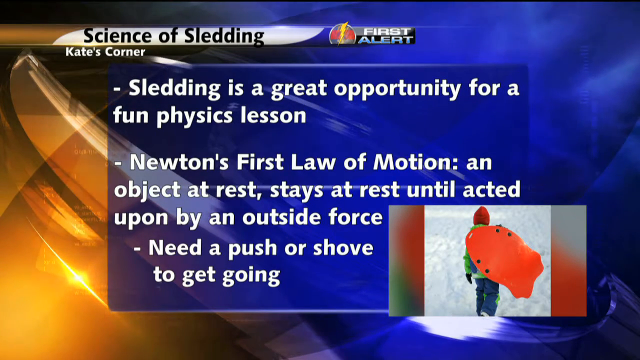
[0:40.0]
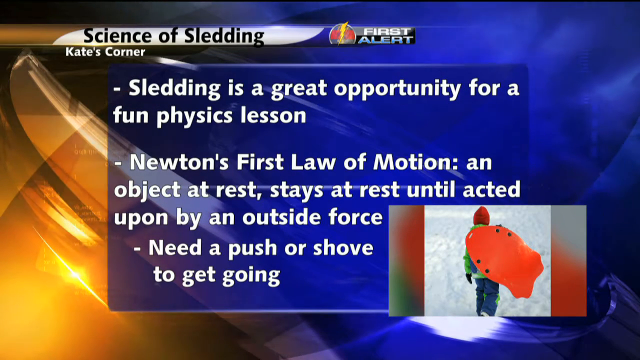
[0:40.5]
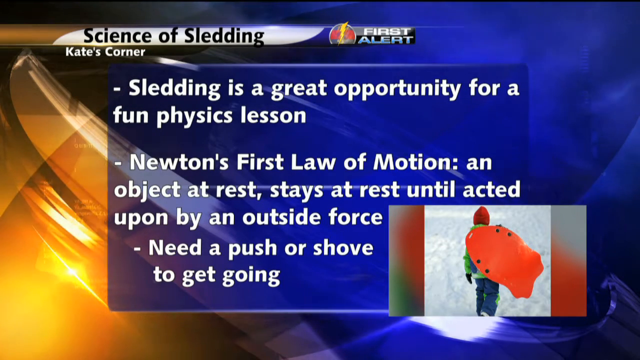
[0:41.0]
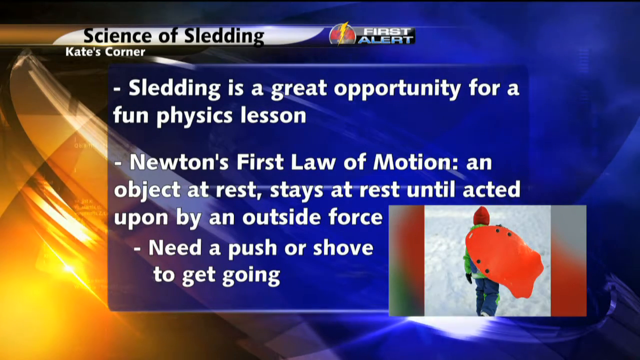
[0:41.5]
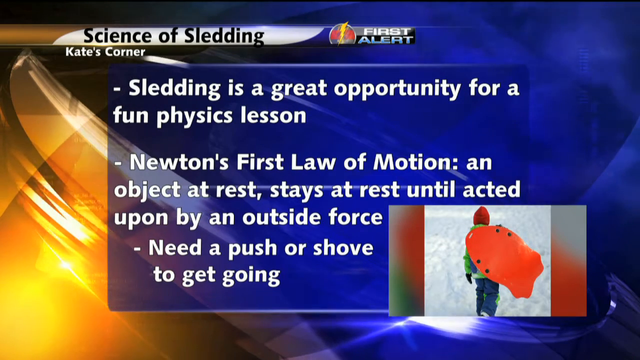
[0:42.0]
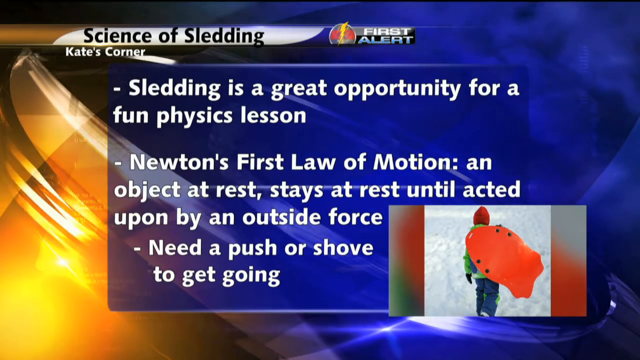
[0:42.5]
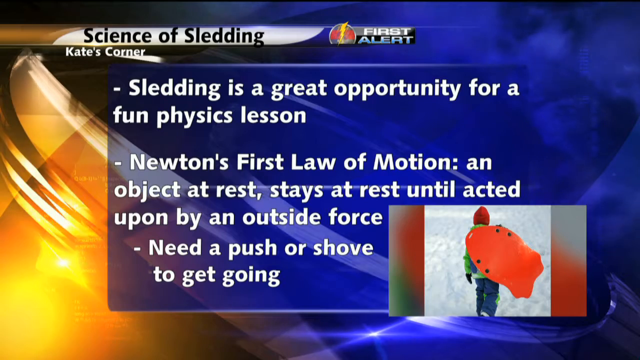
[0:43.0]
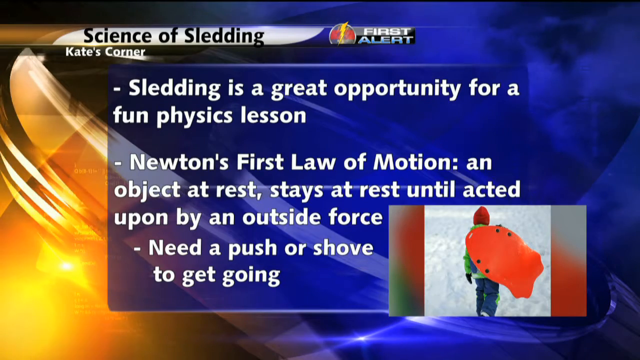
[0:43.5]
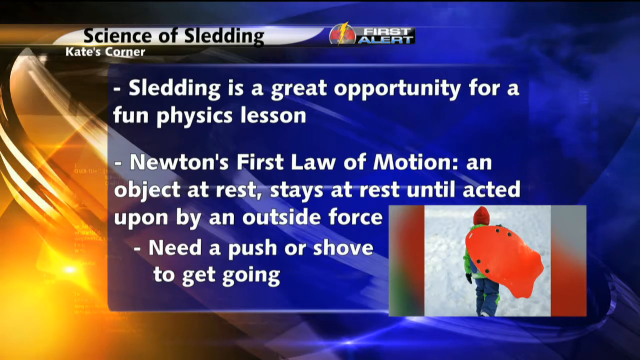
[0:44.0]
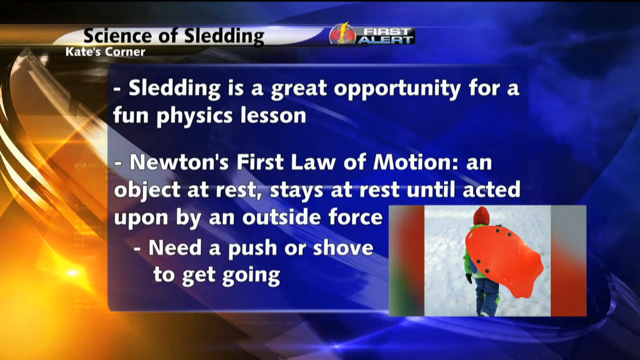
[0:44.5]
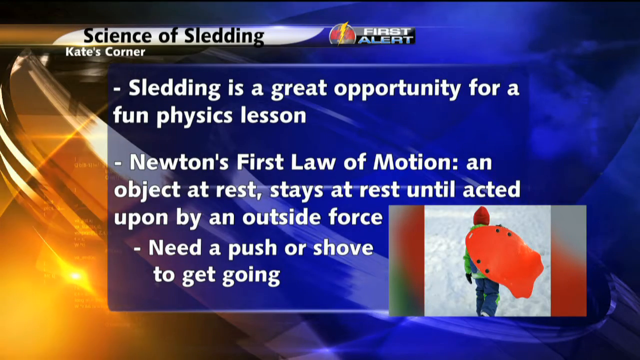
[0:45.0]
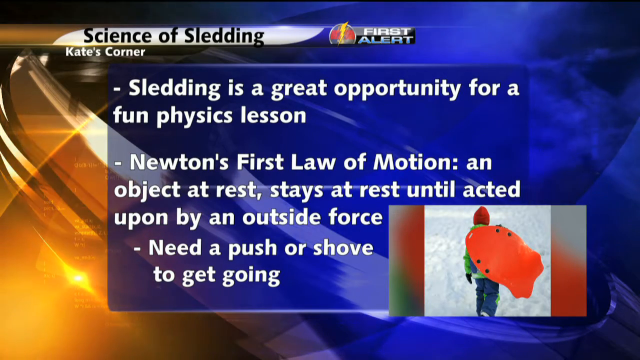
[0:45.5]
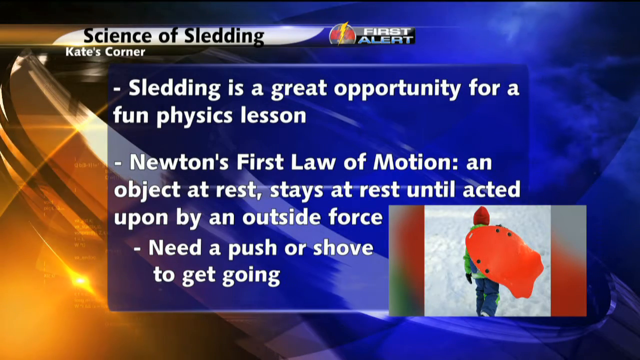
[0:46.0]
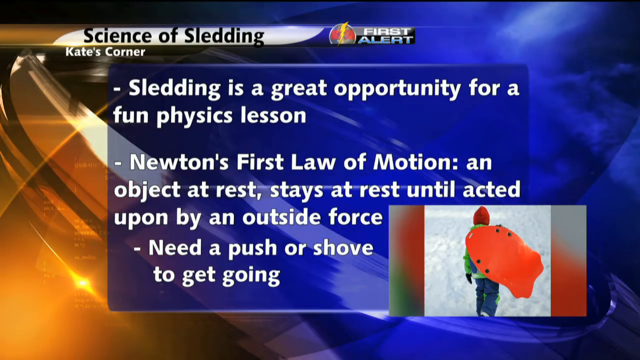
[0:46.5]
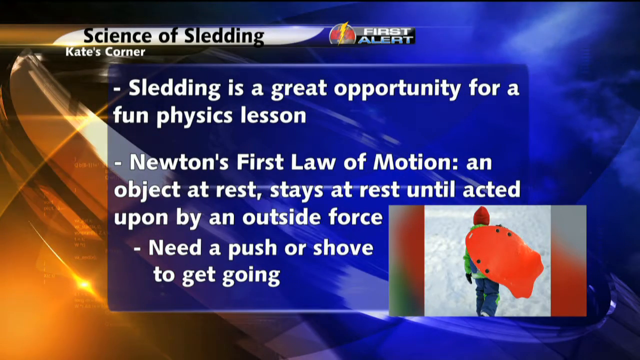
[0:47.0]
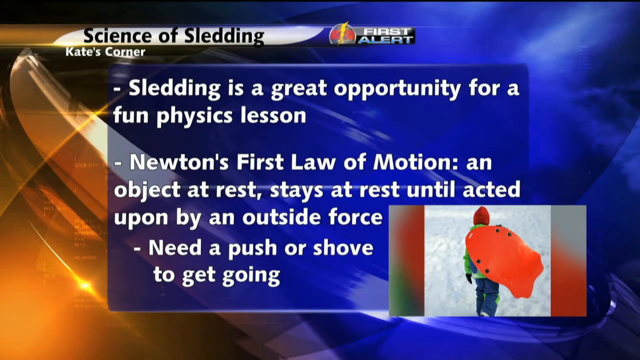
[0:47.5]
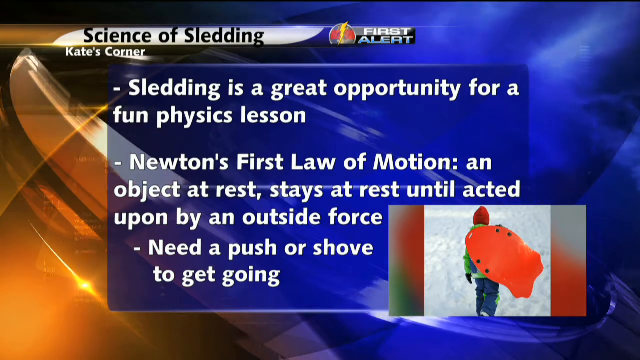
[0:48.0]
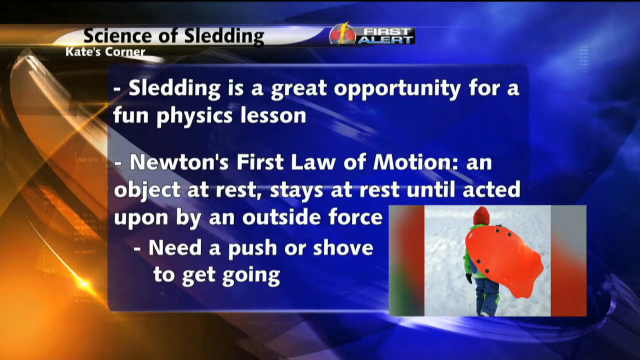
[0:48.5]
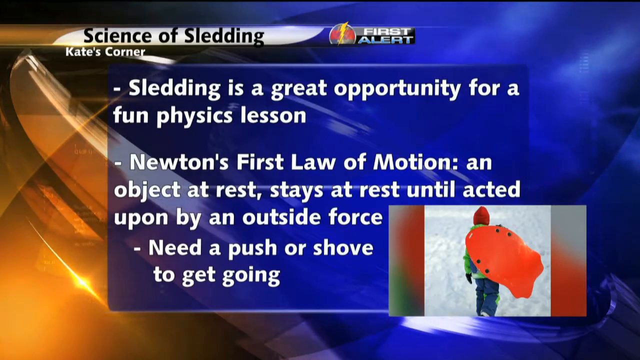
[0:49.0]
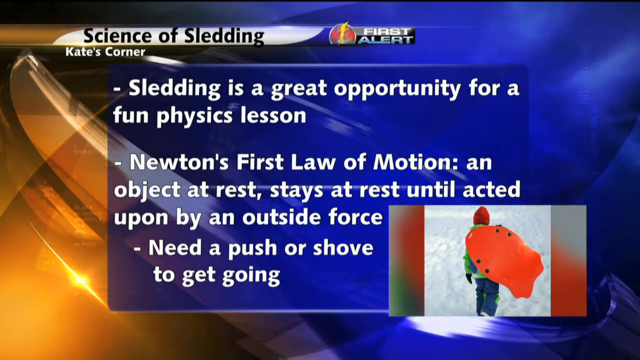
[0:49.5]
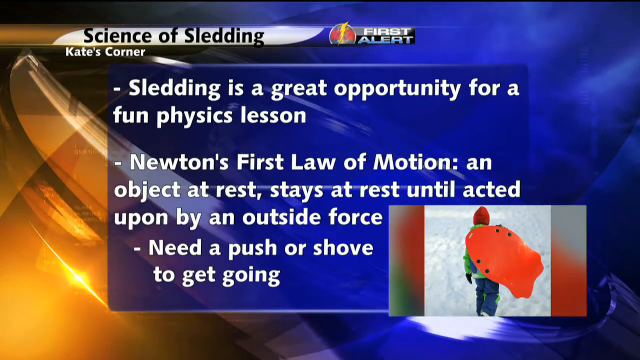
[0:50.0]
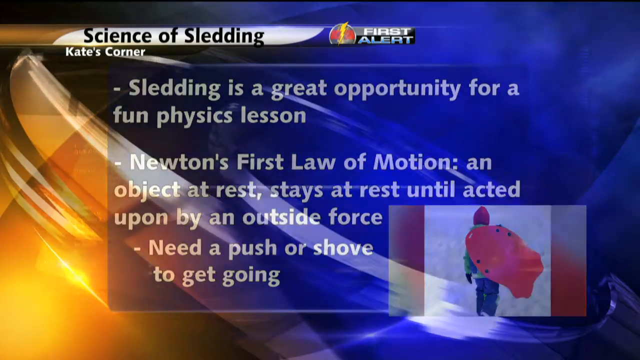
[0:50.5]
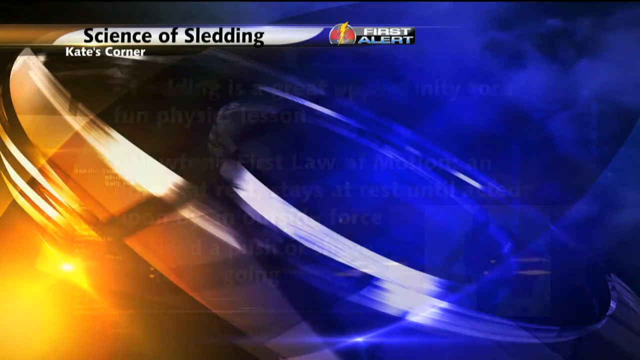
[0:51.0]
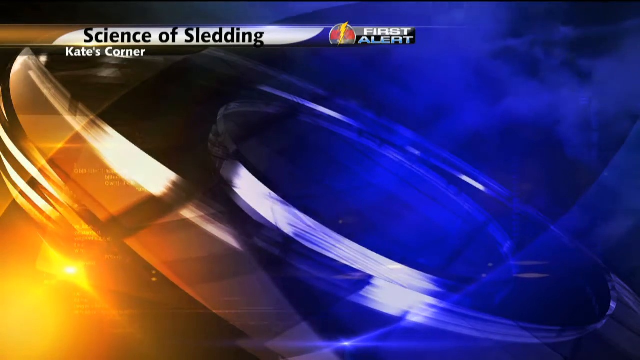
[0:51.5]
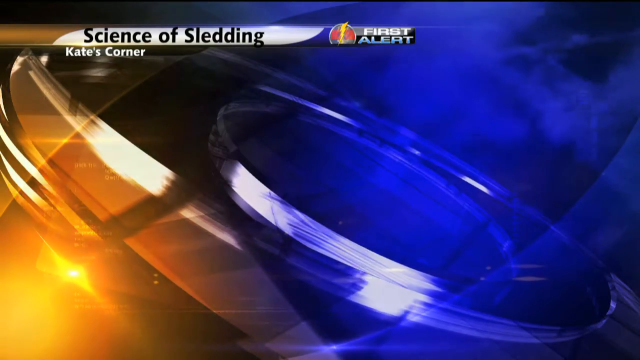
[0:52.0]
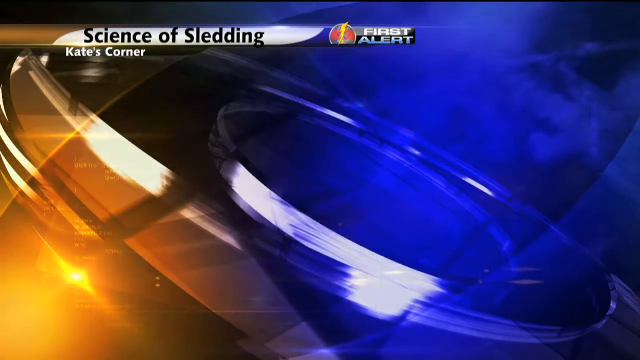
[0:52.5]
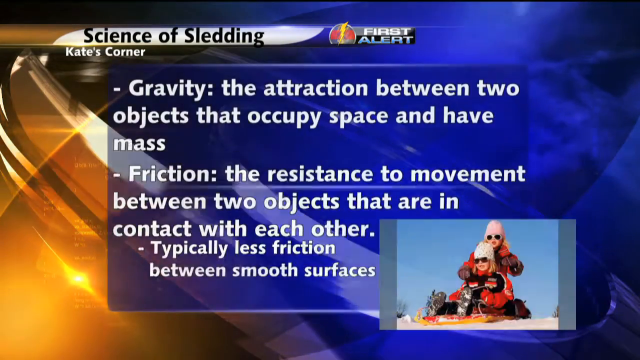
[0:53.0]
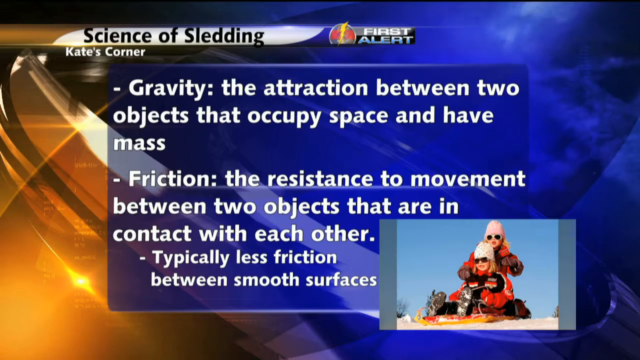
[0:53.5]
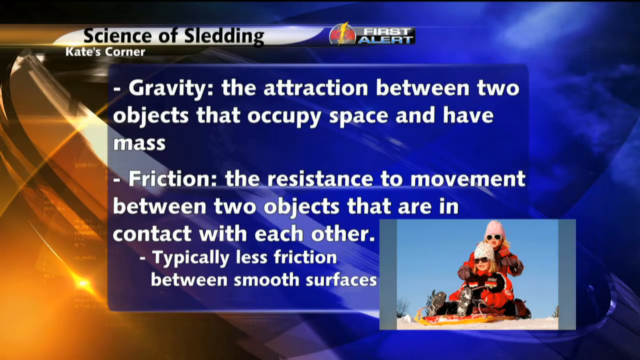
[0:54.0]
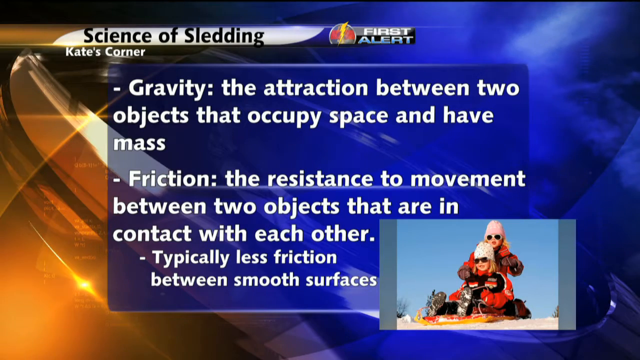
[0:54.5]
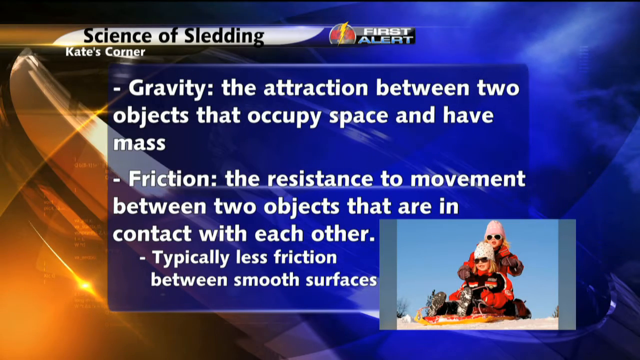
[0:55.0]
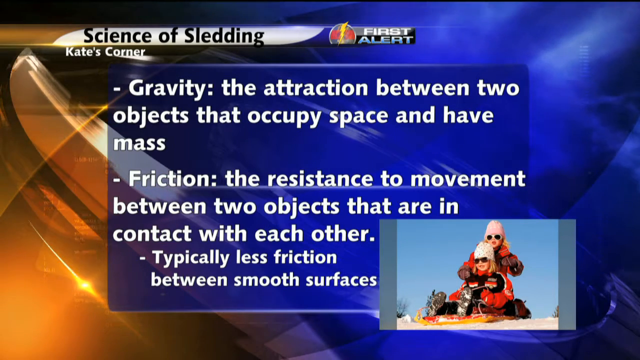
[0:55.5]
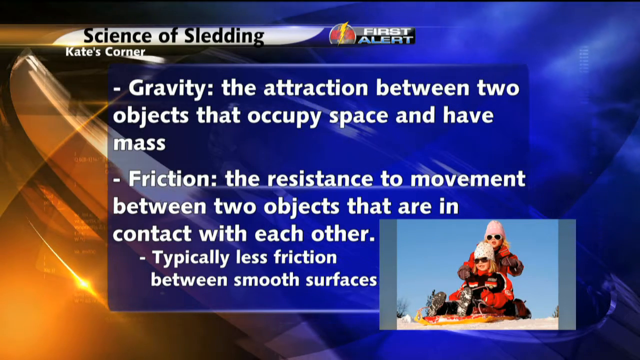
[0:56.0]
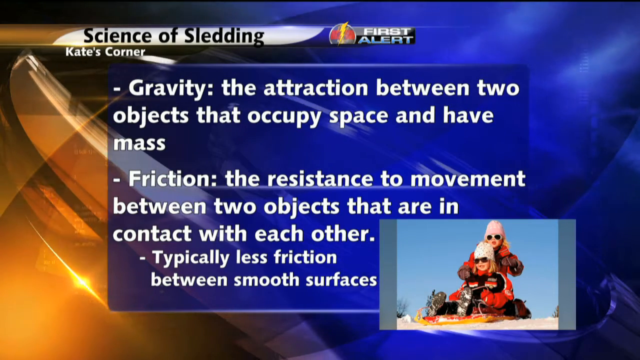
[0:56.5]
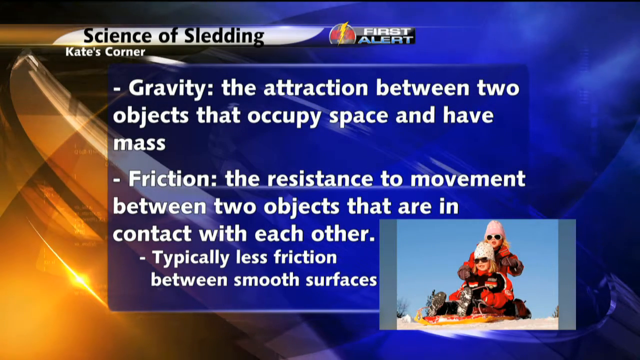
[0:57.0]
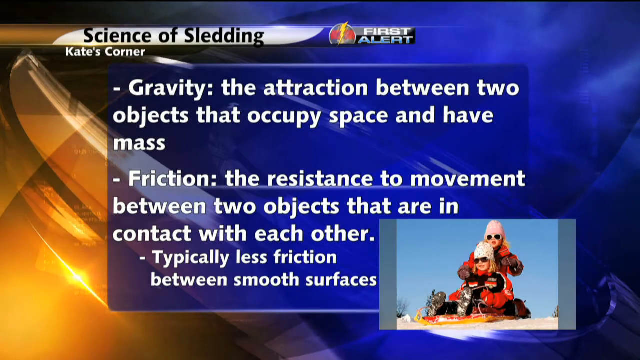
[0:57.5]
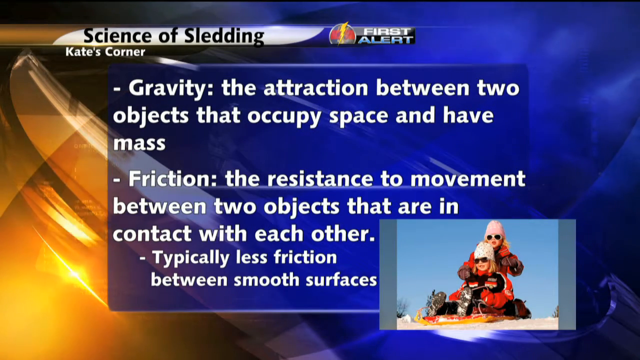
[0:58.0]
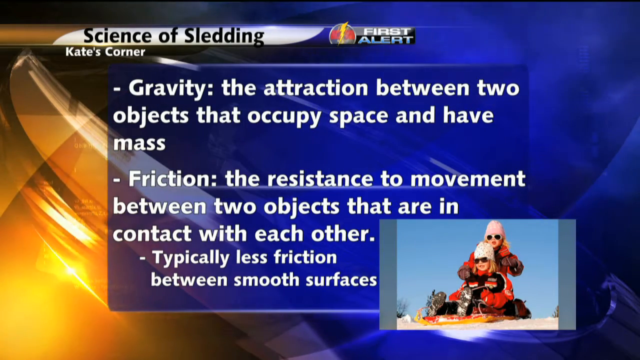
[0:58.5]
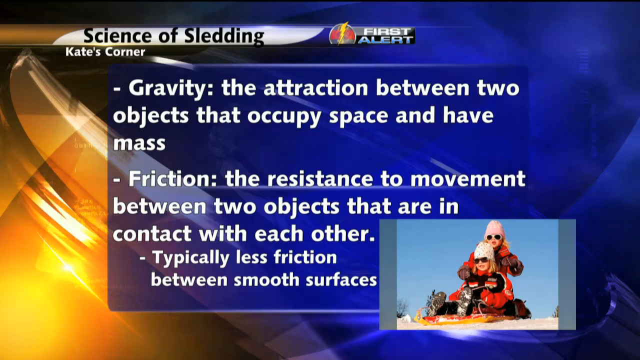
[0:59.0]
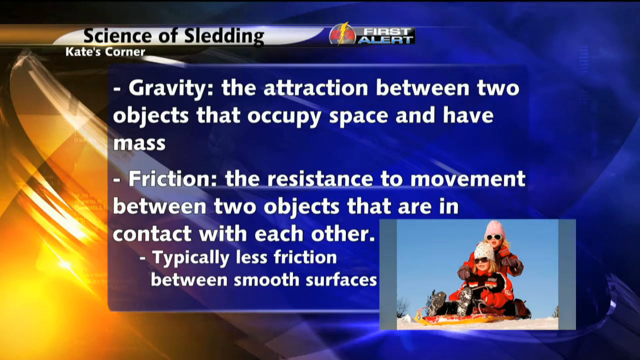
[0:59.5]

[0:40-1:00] In the lower right corner, a young person carries an orange sled on their back while walking up a hill of snow. This part of the segment then disappears and the next part appears, titled "Science of Sledding" with the first alert segment and "Kate's Corner." The text reads: "gravity, the attraction between two objects that occupy space and have mass, friction, the resistance to movement between two objects that are in contact with each other, typically less friction between smooth surfaces." In the lower corner, two kids on a sled start down from the top of a hill. They wear beanie hats, one white and the other apparently pink, along with sunglasses and red and black insulated clothing. The sled they sit on looks yellow and is on ice. The sky behind them is light blue, and it appears to be a sunny day. Each kid seems to have blonde hair reaching around shoulder length.